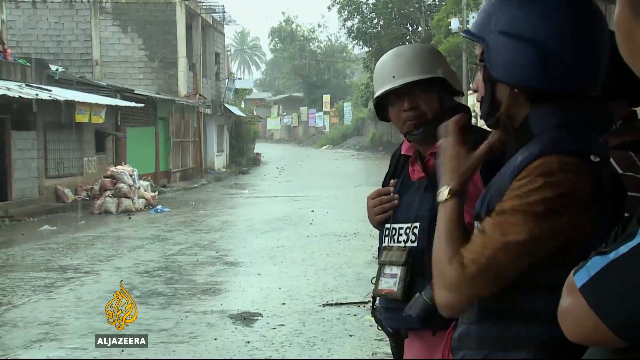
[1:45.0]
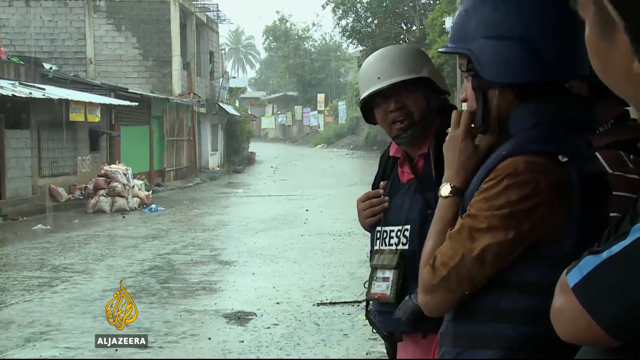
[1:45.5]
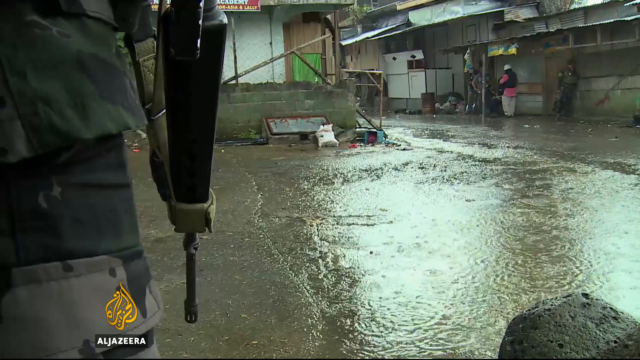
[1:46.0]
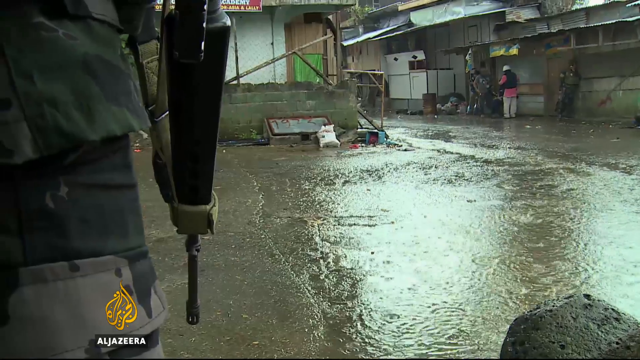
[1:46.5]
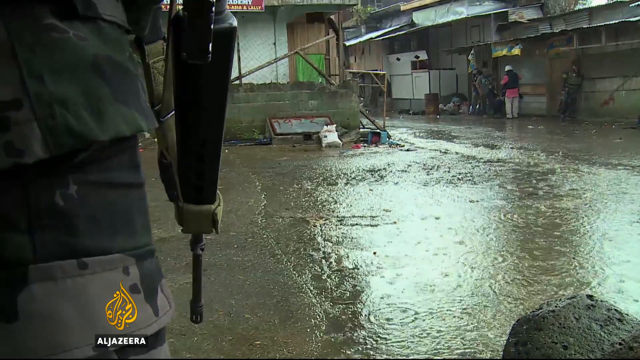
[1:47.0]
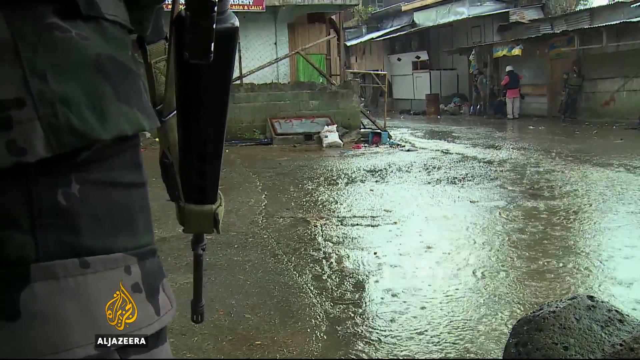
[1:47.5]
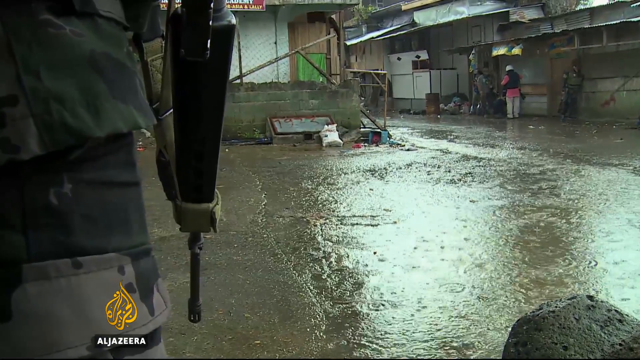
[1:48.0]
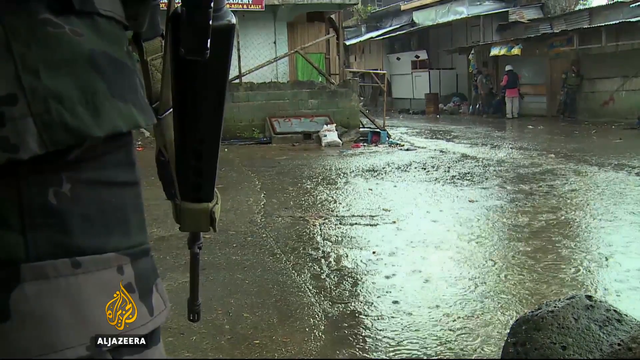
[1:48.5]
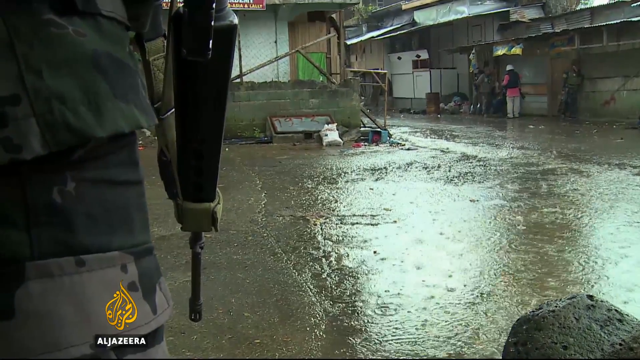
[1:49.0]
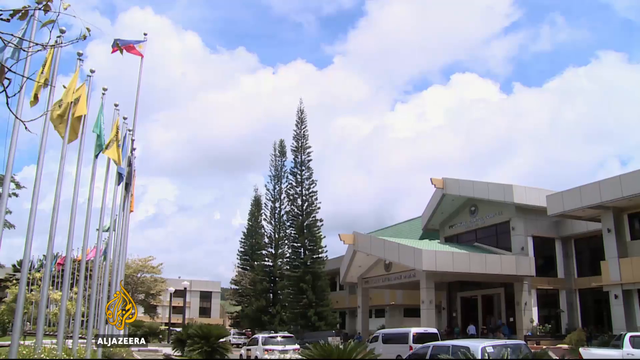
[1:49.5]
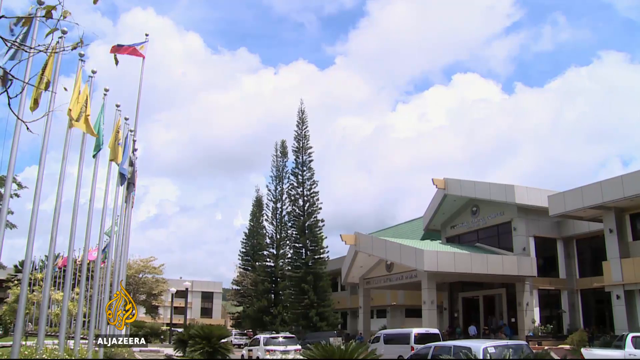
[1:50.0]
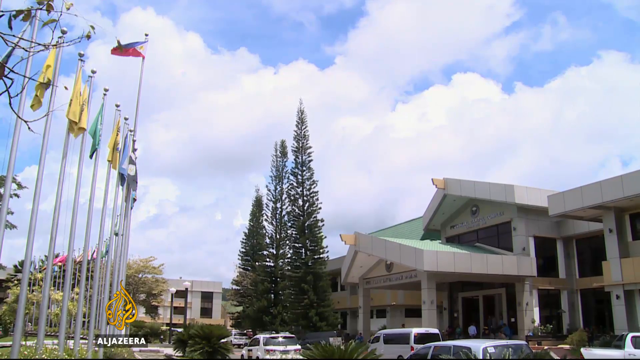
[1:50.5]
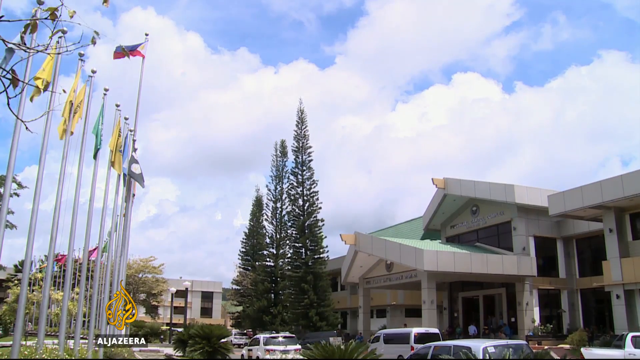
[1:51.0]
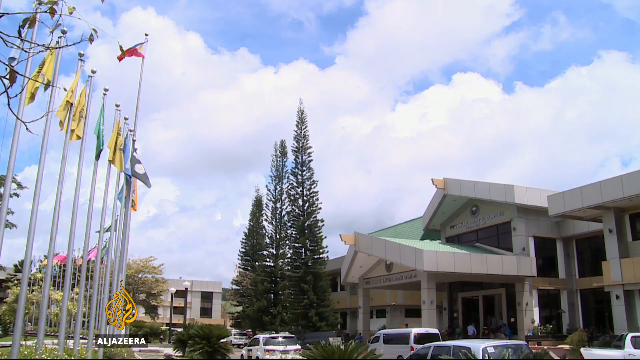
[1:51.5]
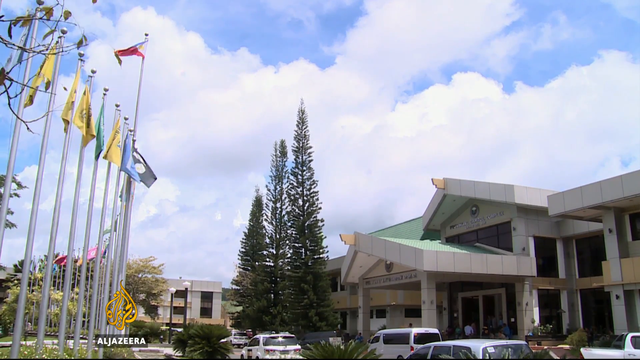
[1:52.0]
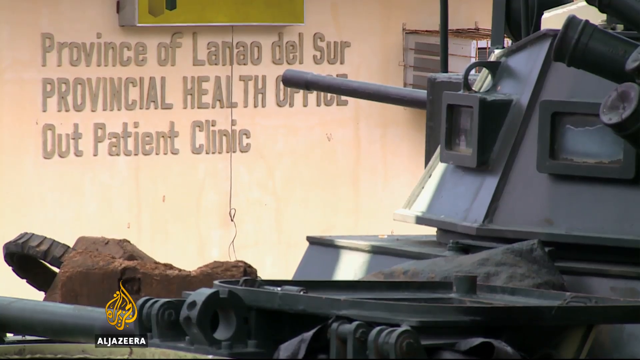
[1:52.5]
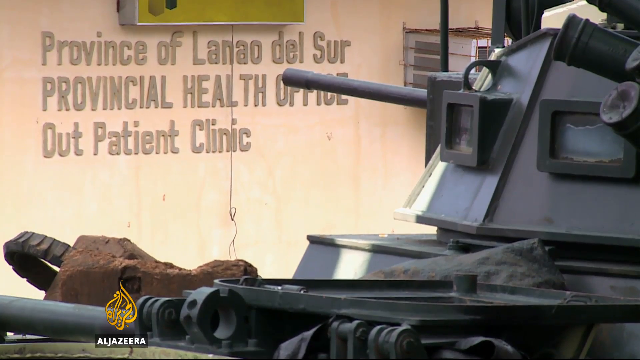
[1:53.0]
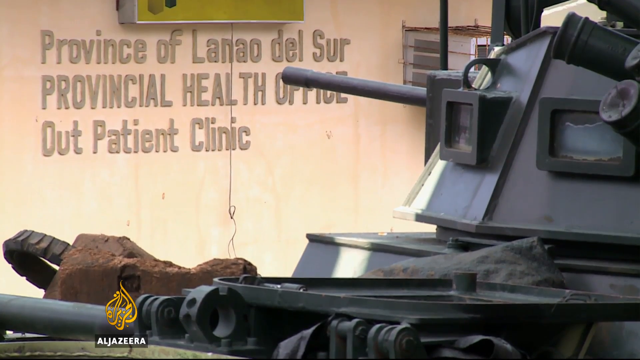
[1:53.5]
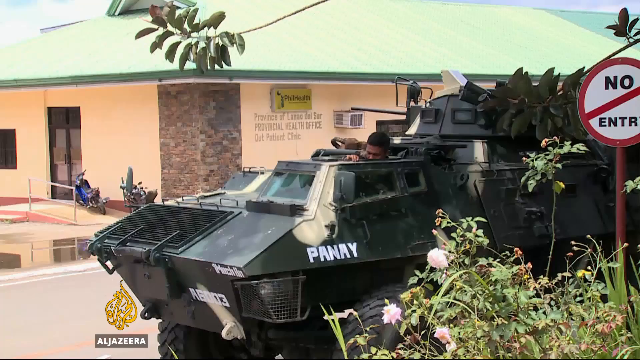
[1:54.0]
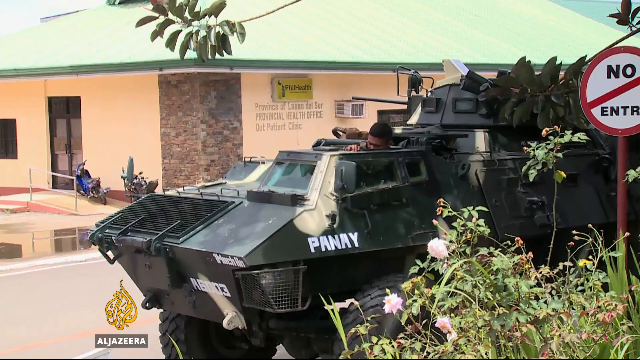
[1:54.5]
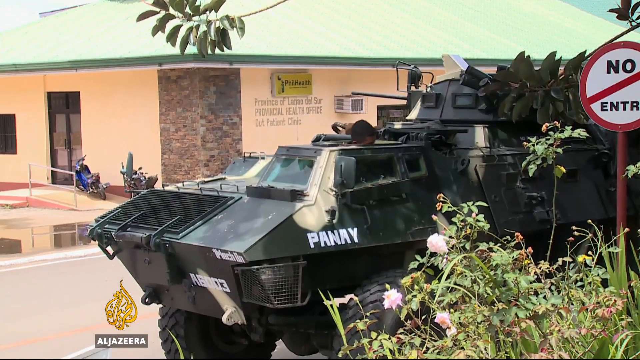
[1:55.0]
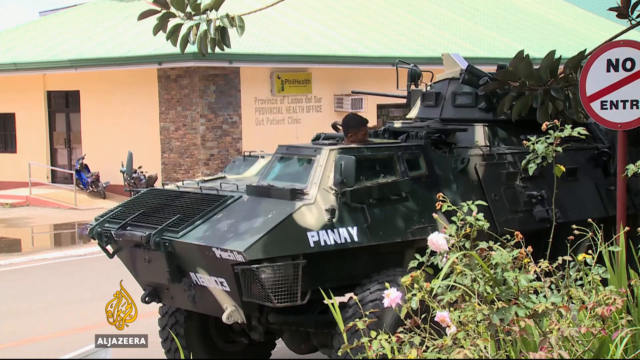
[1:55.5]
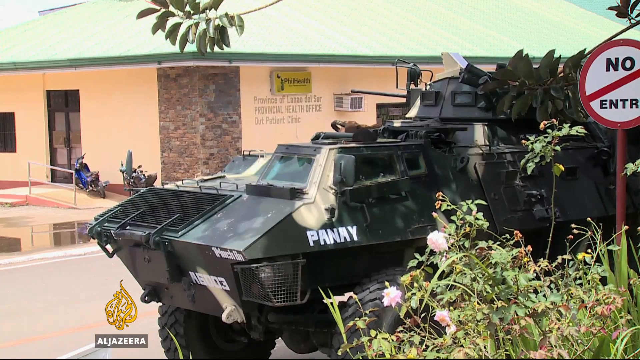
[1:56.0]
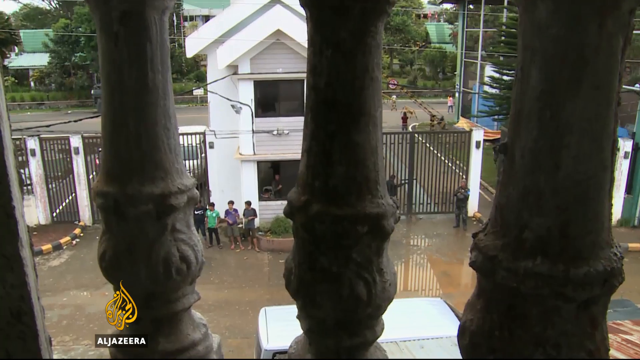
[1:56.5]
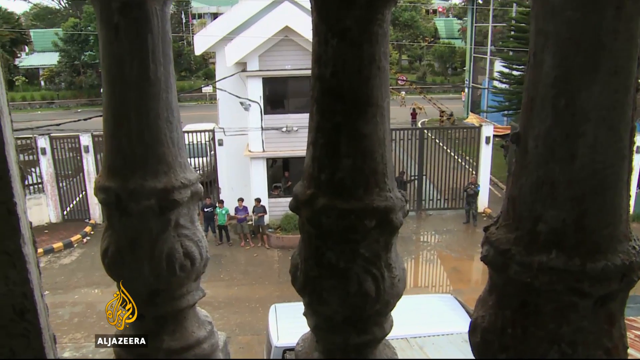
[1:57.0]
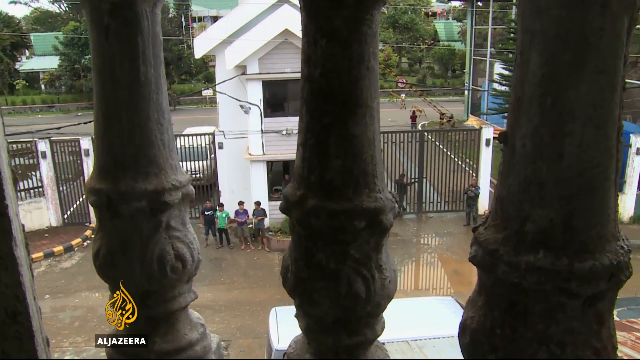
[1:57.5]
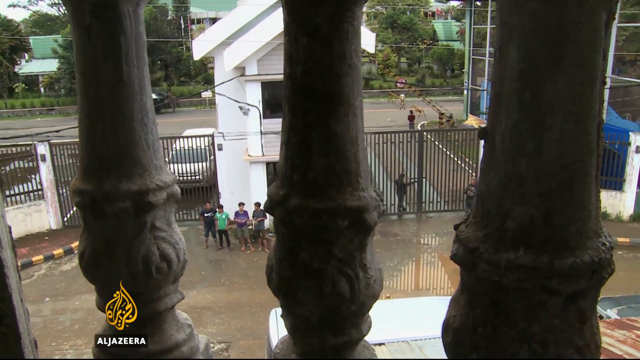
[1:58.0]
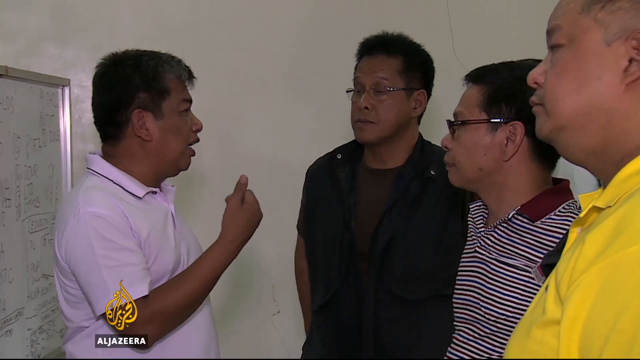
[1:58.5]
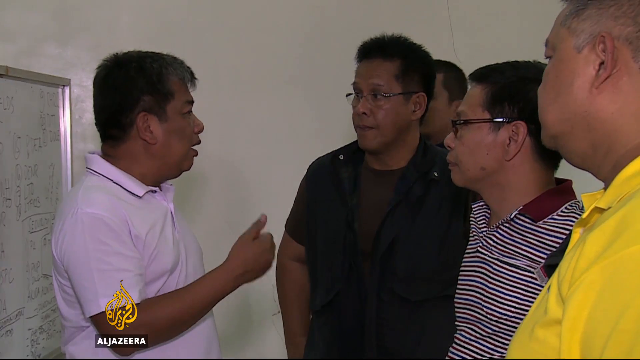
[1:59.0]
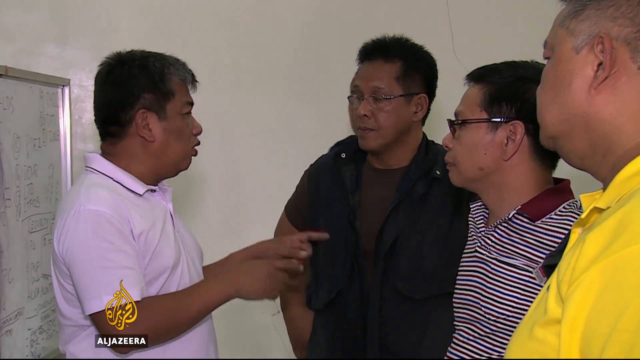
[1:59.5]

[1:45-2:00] A street scene shows the rain pouring down. The video then cuts to a different location with clear skies and sun, which looks like some kind of political location or federal building with a lot of flags out in front; it is a provincial health office, with a tank parked in front of it. A group of men in somewhat casual clothes speak inside, possibly political figures, federal workers or medical personnel. Several other shots apparently show the exterior from different angles.